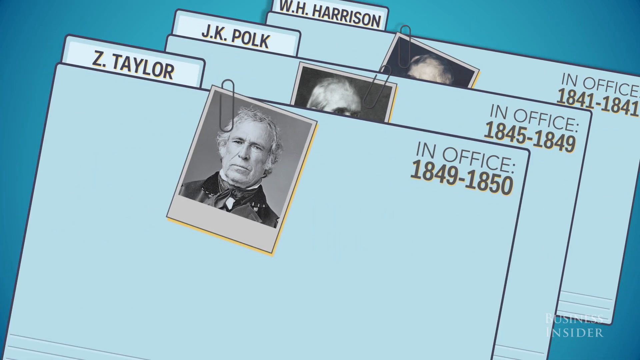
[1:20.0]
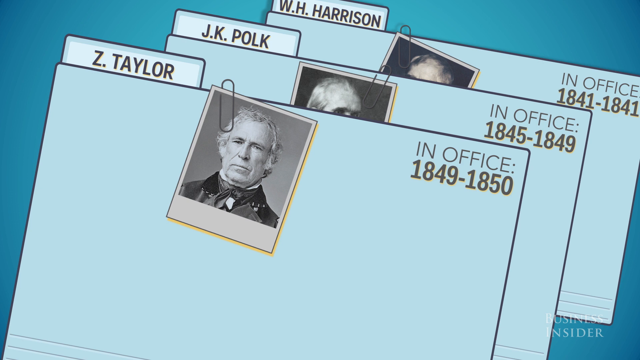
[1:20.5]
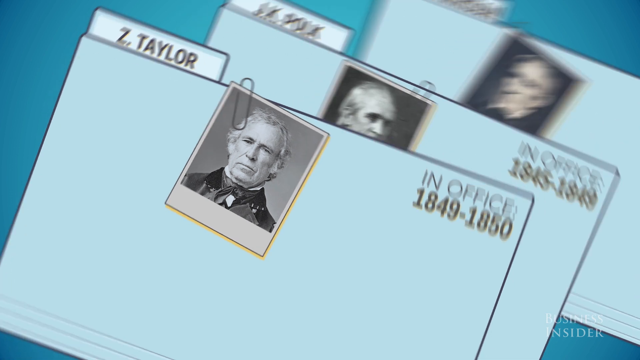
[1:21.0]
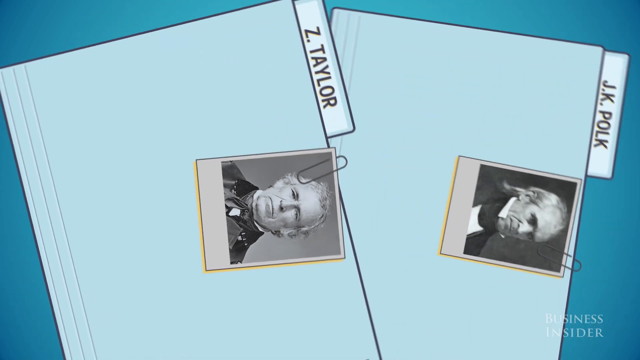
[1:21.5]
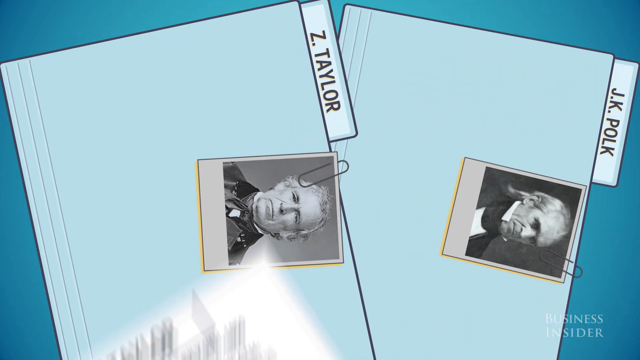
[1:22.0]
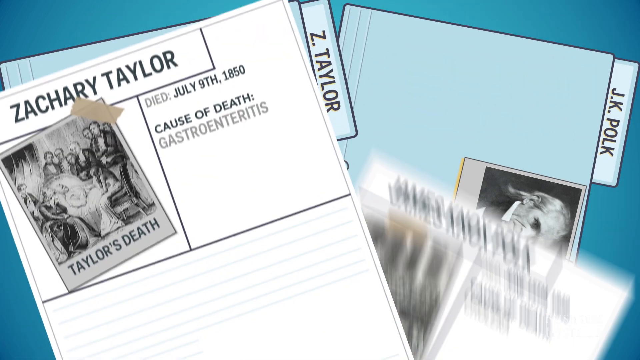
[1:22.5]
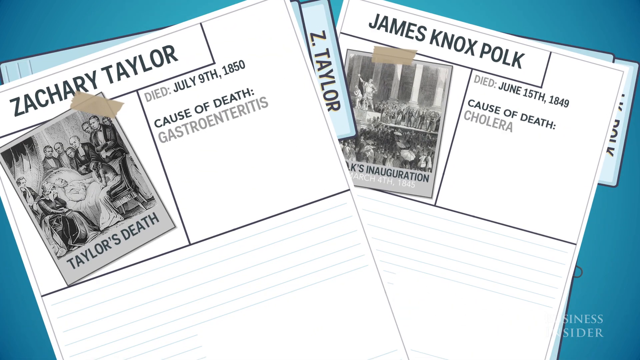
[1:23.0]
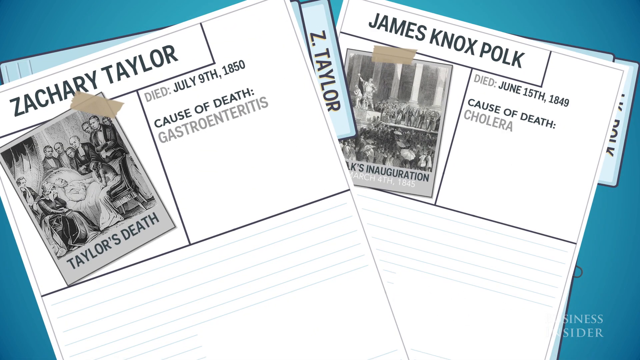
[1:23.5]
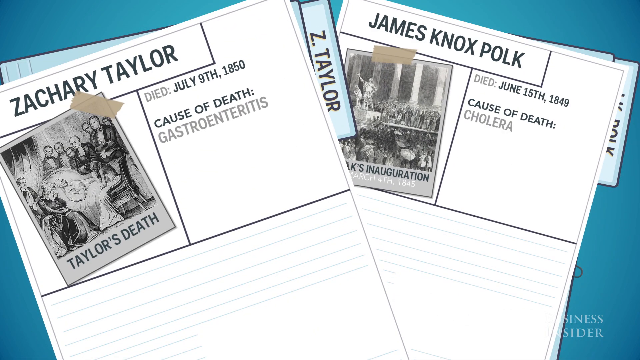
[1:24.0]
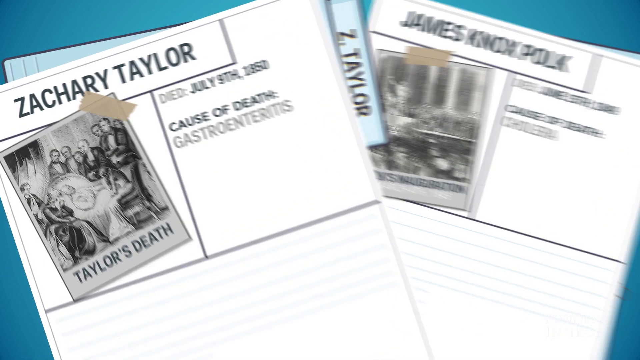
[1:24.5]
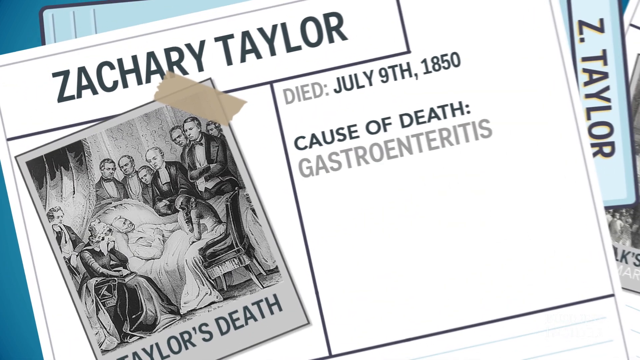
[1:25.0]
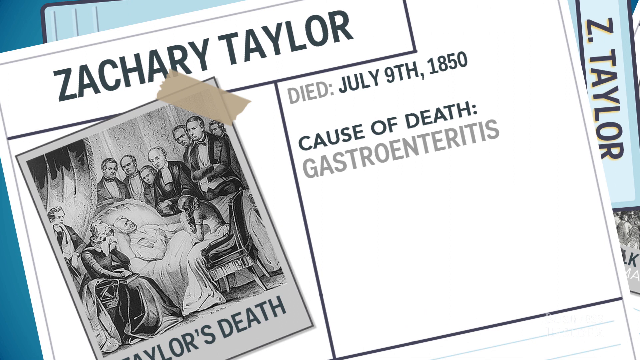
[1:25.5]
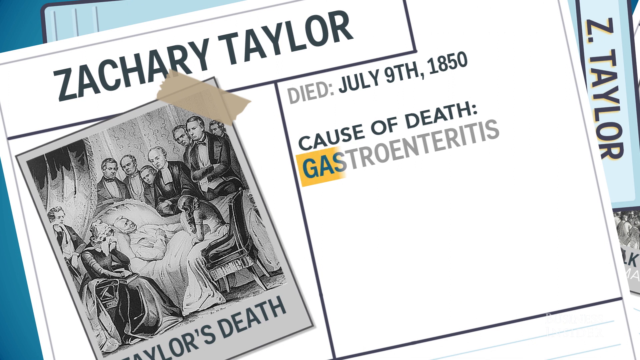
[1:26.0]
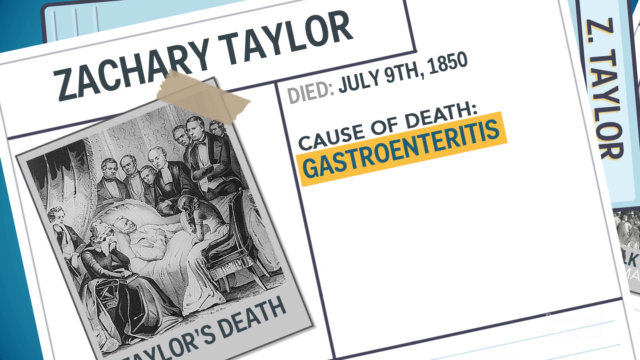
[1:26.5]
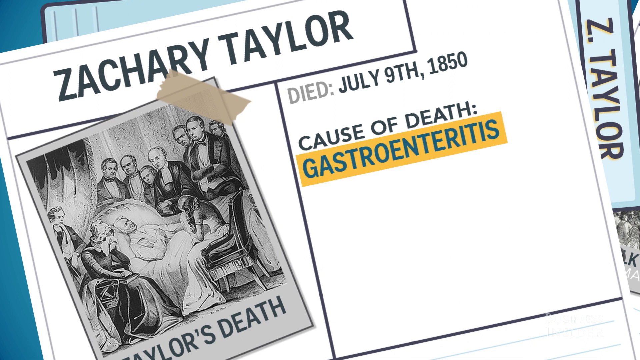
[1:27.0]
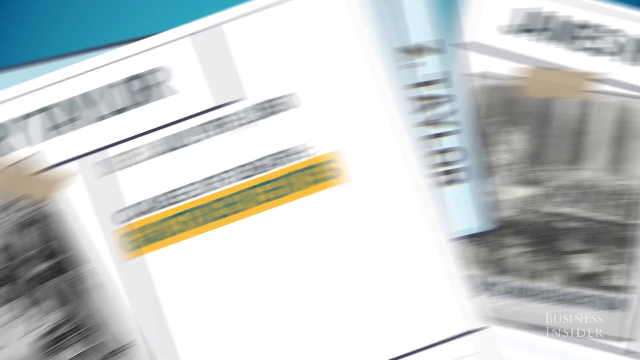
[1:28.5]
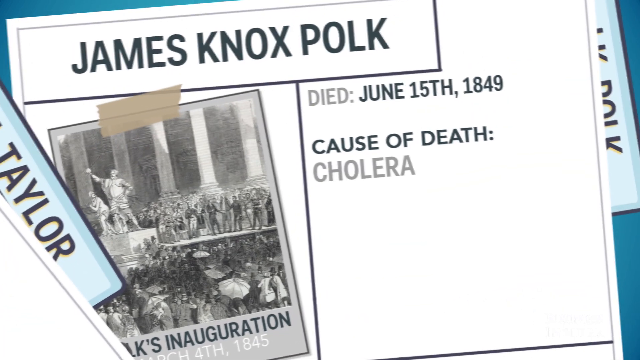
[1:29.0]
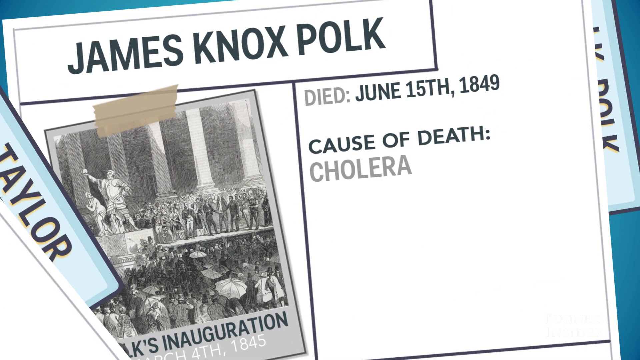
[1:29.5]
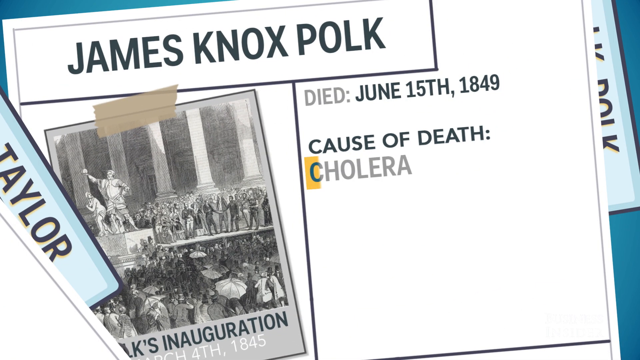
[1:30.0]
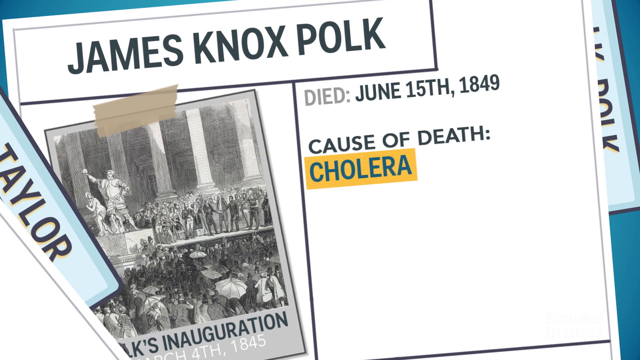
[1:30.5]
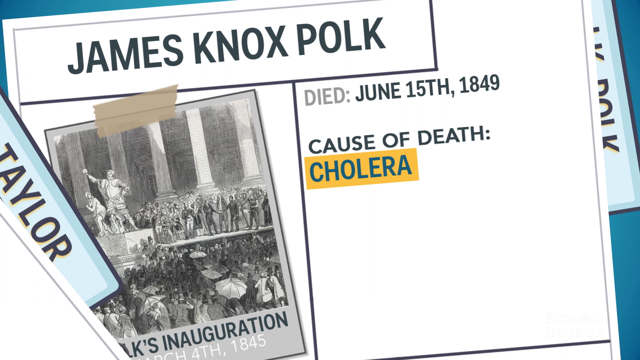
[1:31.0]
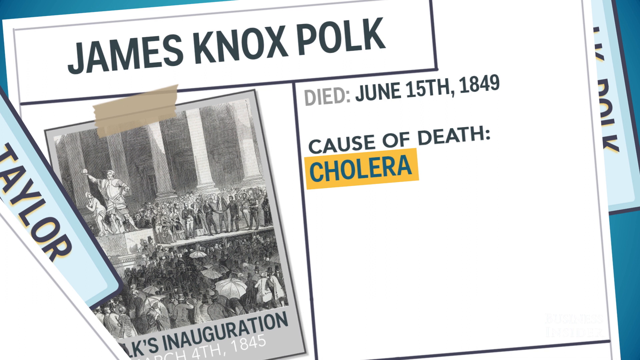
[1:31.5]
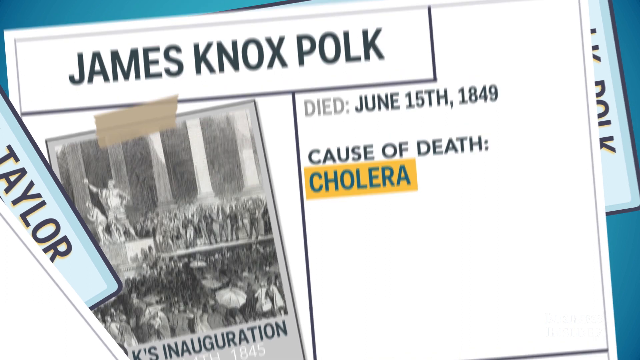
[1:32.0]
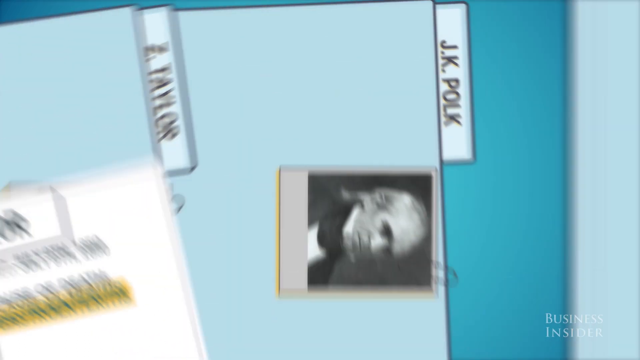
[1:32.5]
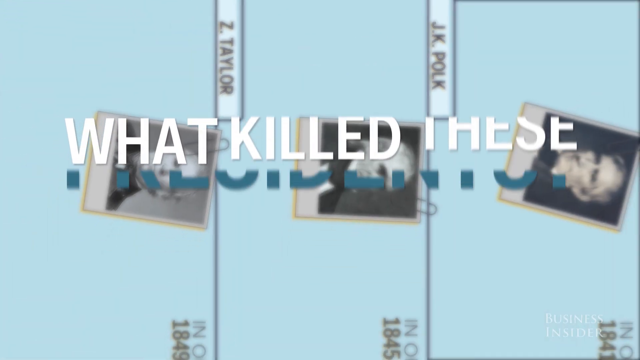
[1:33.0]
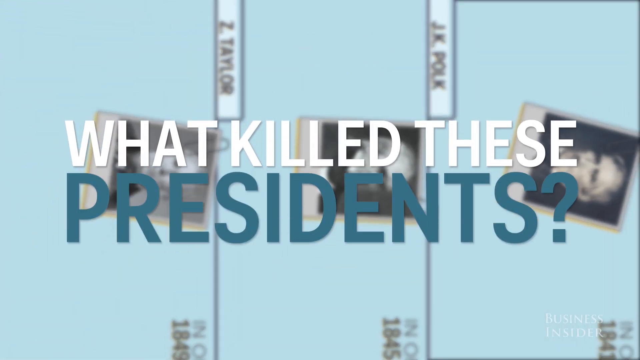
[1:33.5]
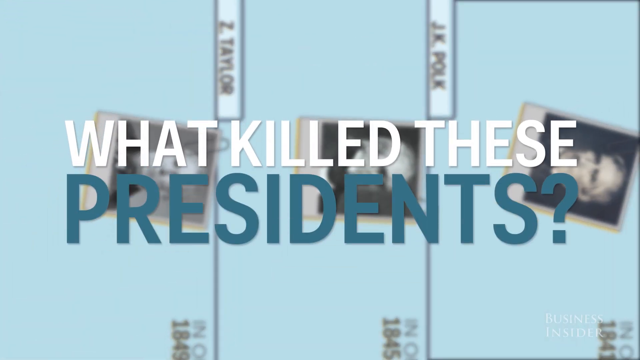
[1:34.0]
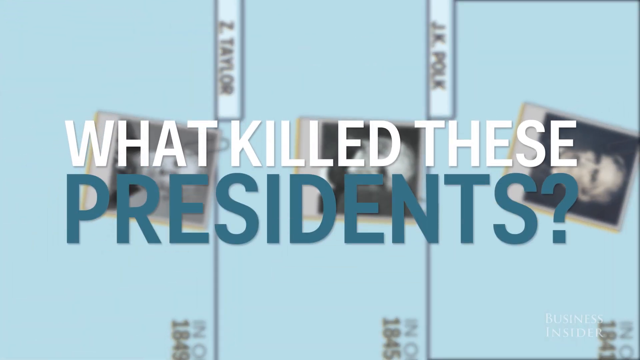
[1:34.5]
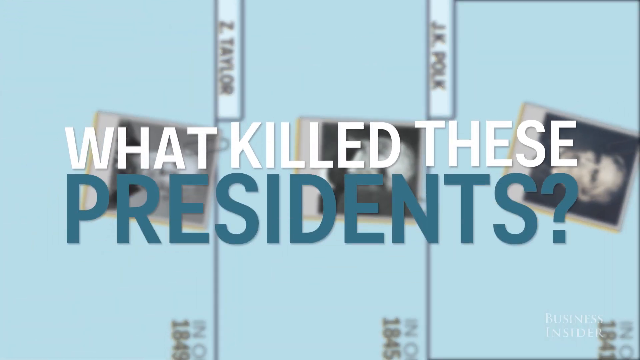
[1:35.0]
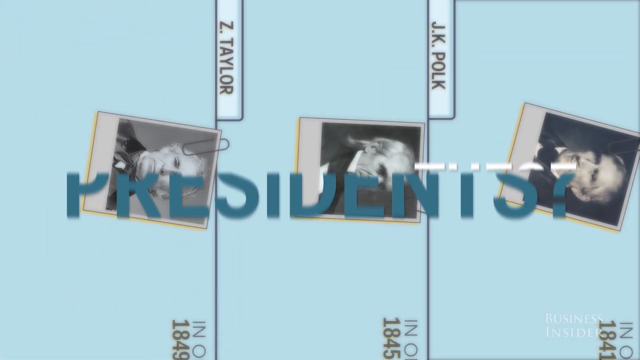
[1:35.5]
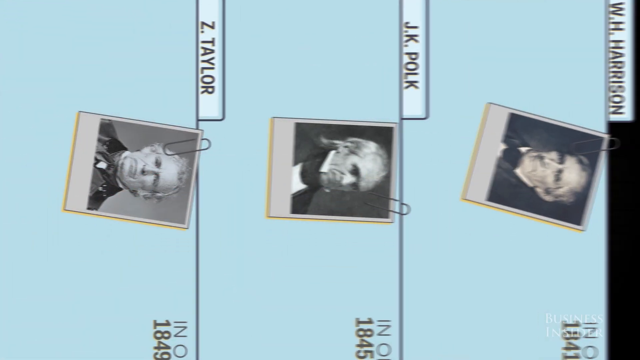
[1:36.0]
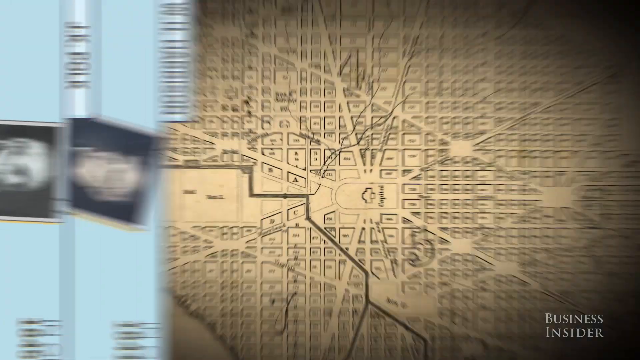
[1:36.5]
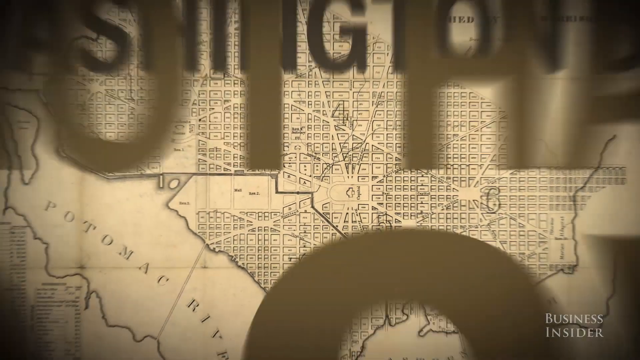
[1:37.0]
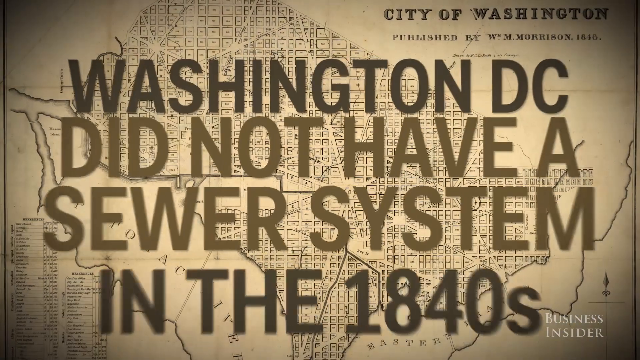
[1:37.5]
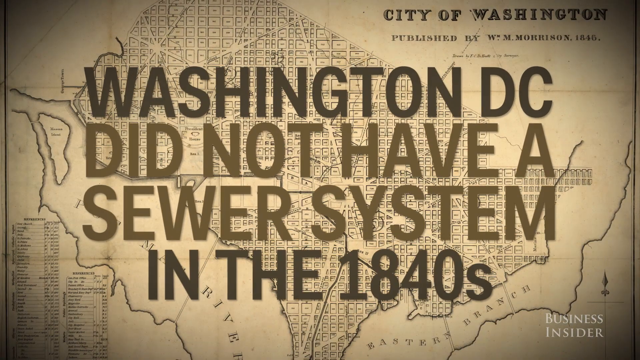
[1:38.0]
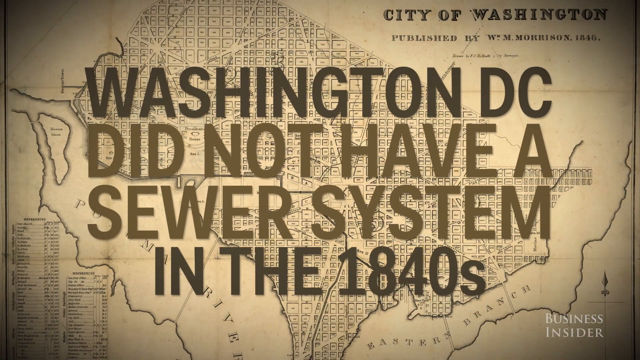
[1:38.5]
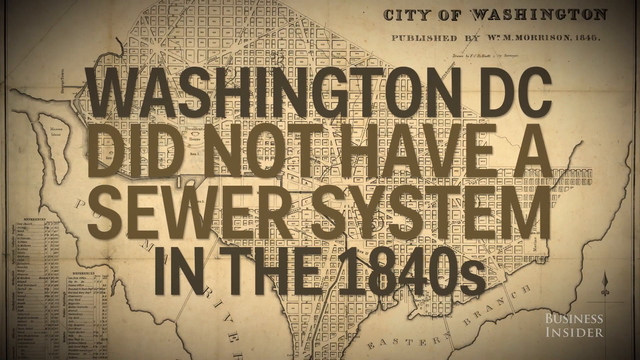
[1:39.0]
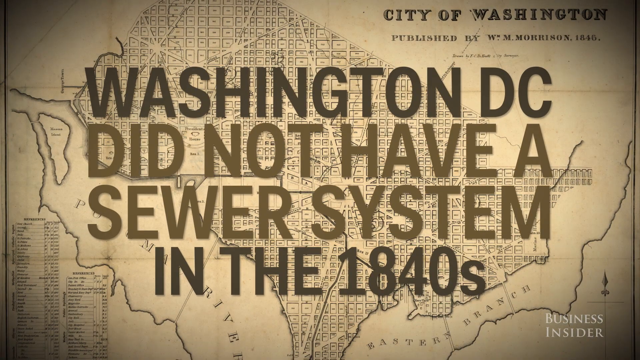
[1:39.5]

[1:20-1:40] The folder of President Zachary Taylor appears, showing he died July 9th, 1850, with his cause of death written as gastroenteritis. On the left-hand side is a black and white drawing of Zachary Taylor on his deathbed, surrounded by people watching him, including two women crying; there are 11 people in the picture, counting Taylor. Next, James Knox Polk is shown as having died June 15th, 1849, of cholera. The following slide shows the three pictures of the presidents sideways; they are blurry and look like Polaroids, and over them the words "what killed these presidents" appear in white and blue. The next slide is a dark tan and black map of the city of Washington, with the text "Washington, D.C. did not have a sewer system in the 1840s" over the city and "Business Insider" in the bottom right-hand corner.